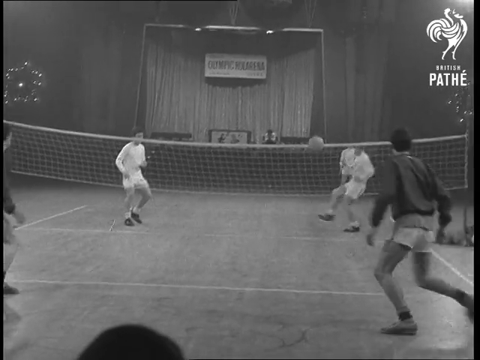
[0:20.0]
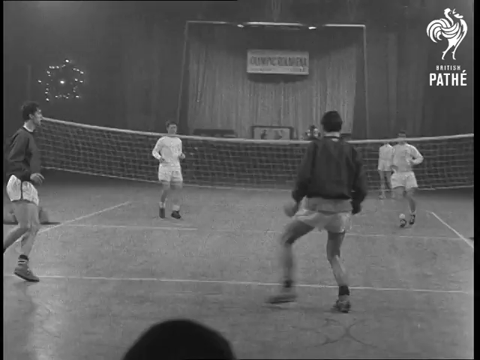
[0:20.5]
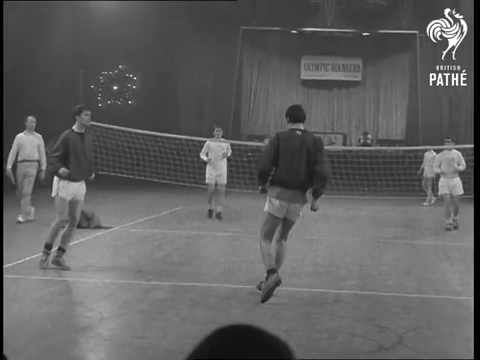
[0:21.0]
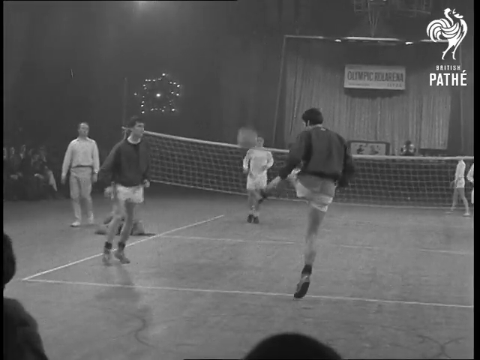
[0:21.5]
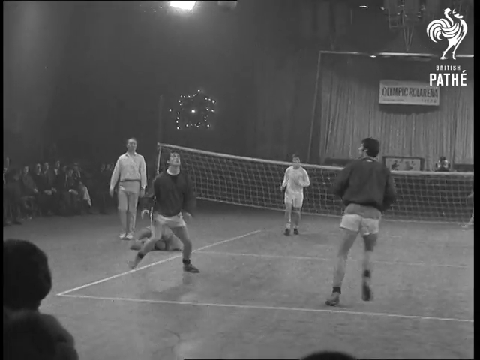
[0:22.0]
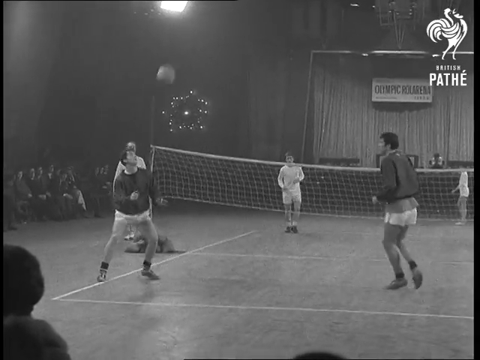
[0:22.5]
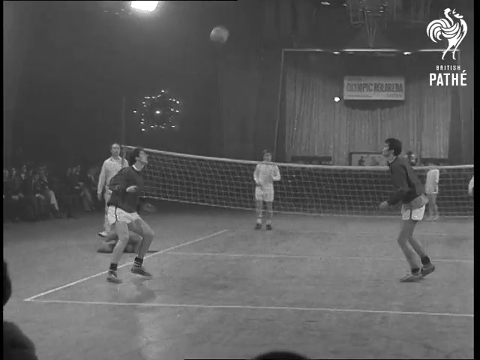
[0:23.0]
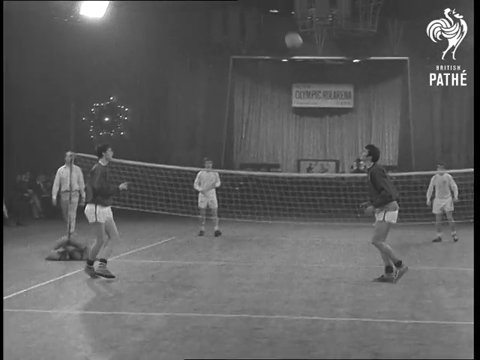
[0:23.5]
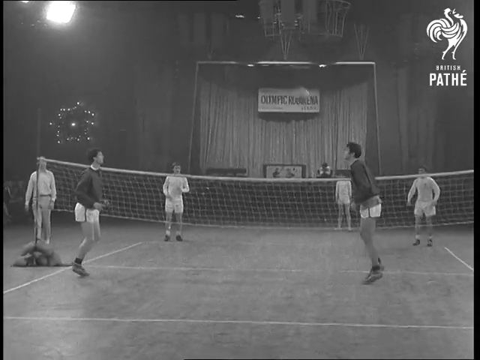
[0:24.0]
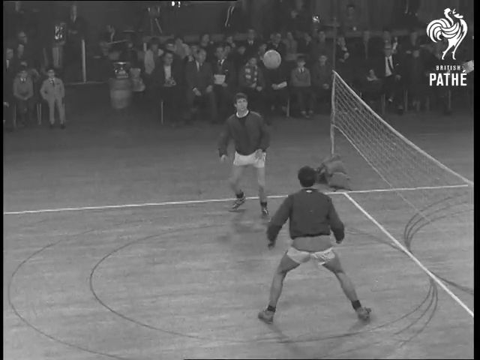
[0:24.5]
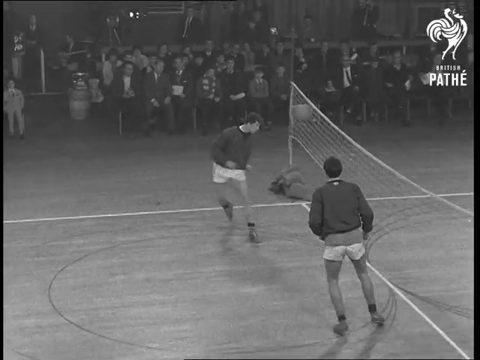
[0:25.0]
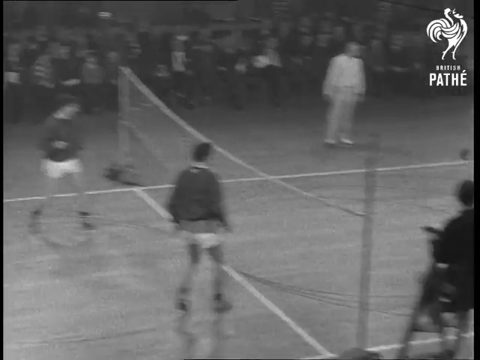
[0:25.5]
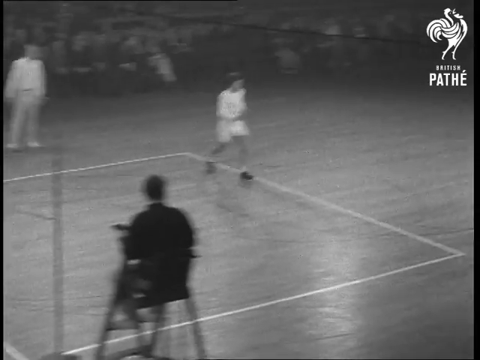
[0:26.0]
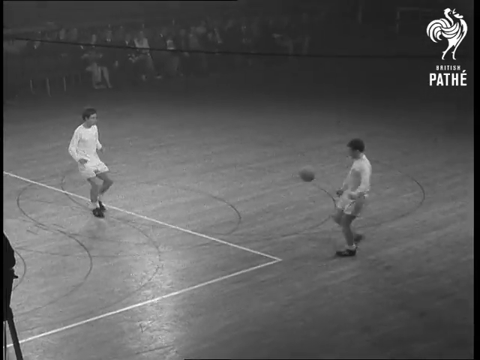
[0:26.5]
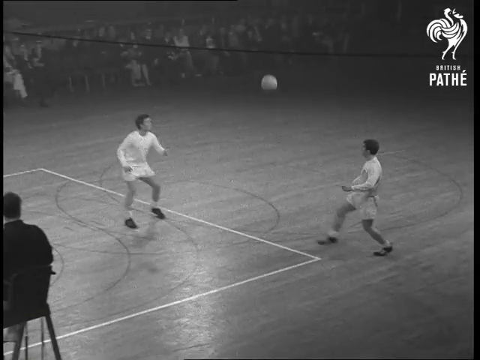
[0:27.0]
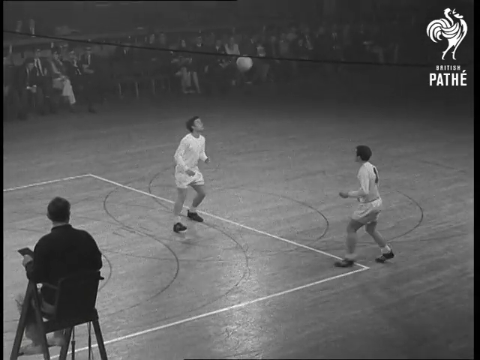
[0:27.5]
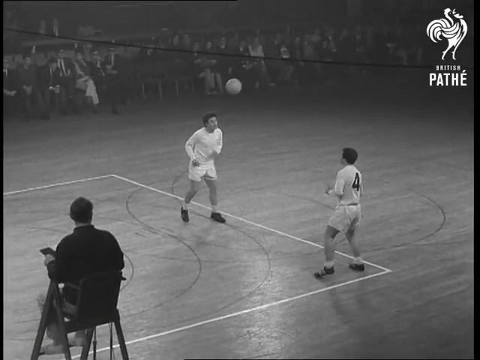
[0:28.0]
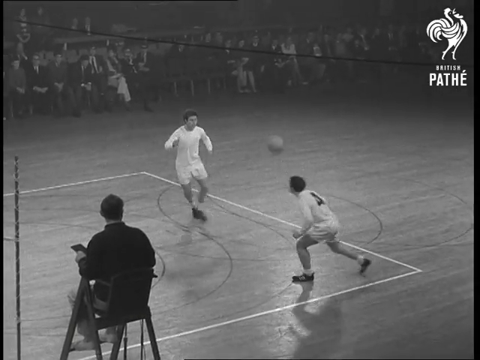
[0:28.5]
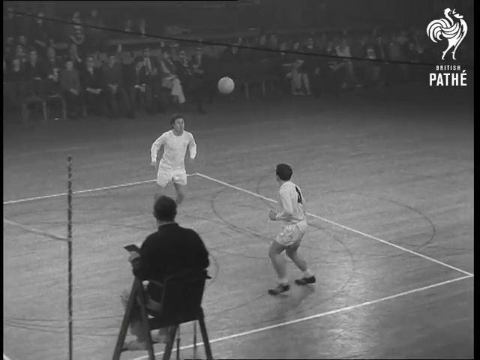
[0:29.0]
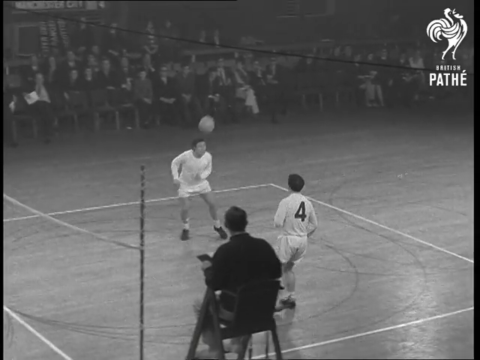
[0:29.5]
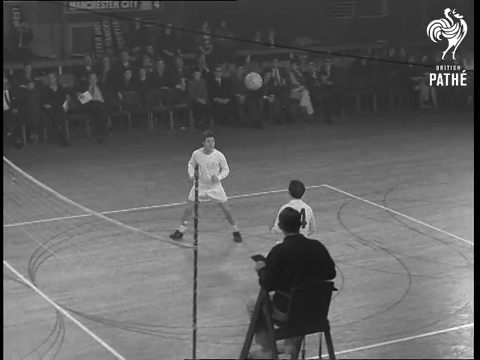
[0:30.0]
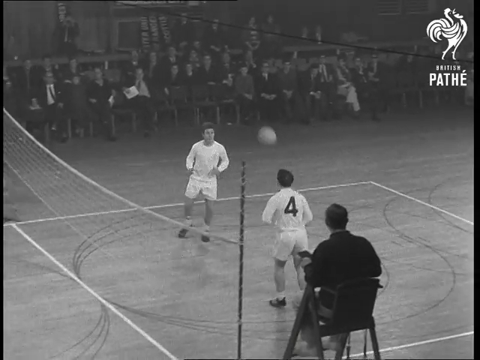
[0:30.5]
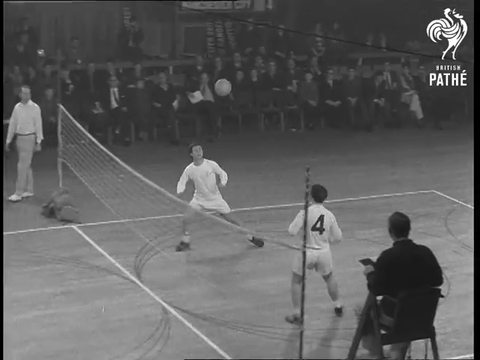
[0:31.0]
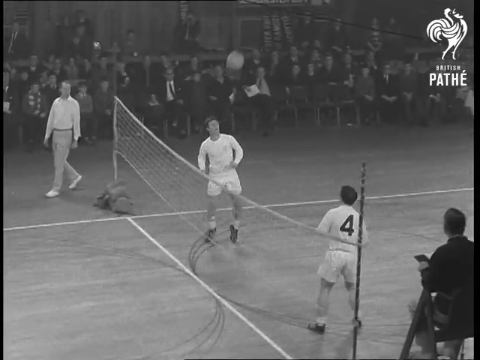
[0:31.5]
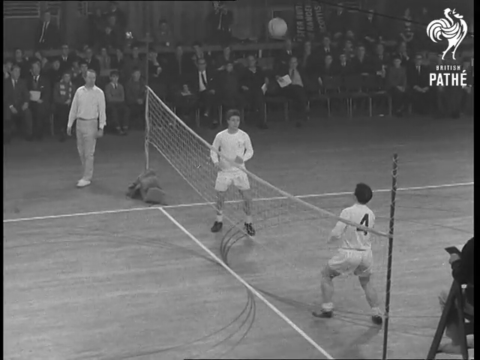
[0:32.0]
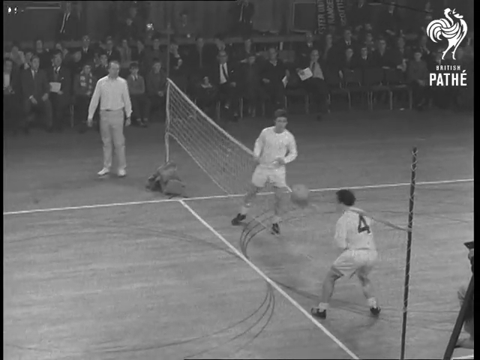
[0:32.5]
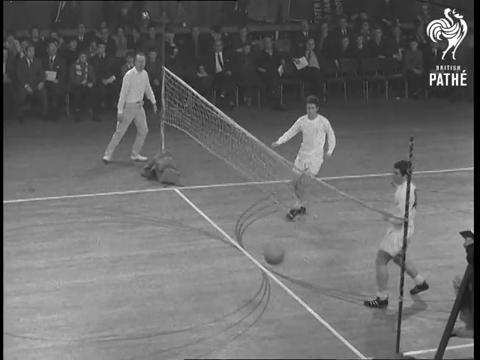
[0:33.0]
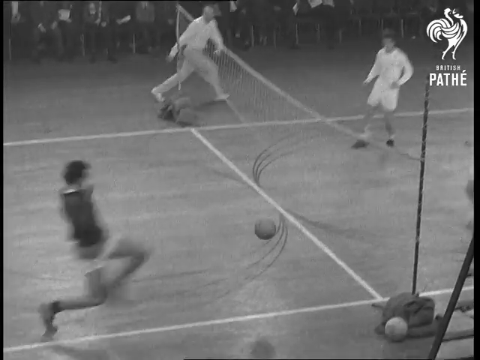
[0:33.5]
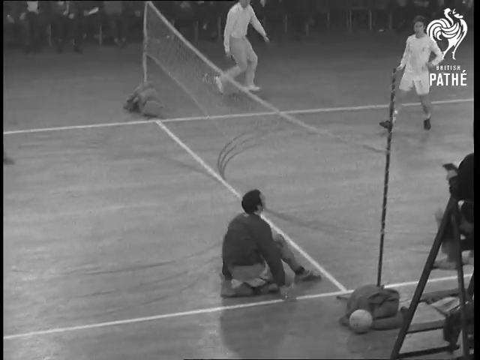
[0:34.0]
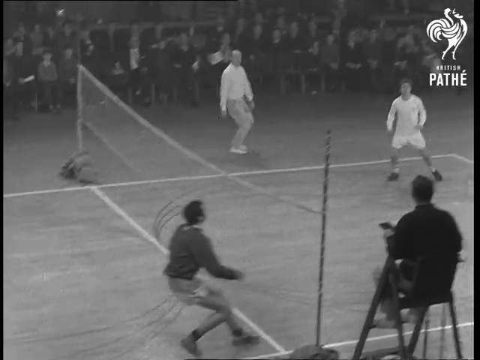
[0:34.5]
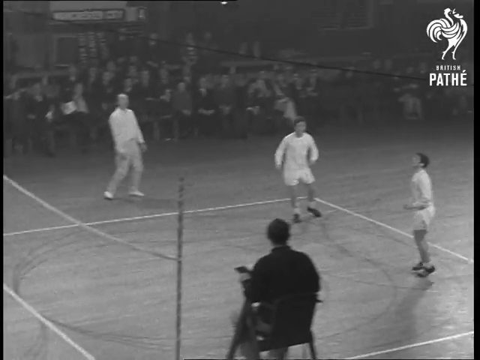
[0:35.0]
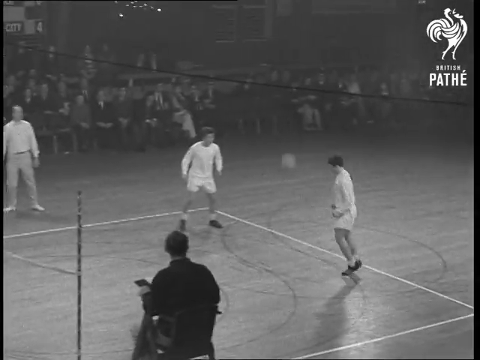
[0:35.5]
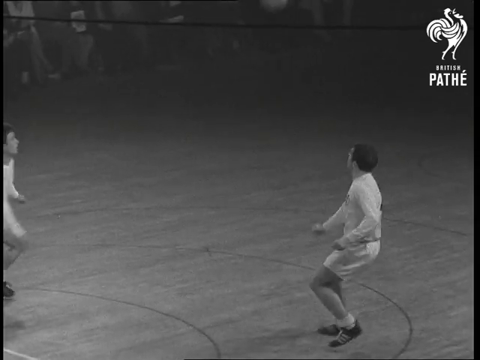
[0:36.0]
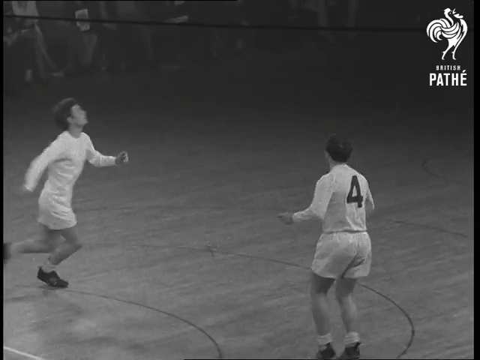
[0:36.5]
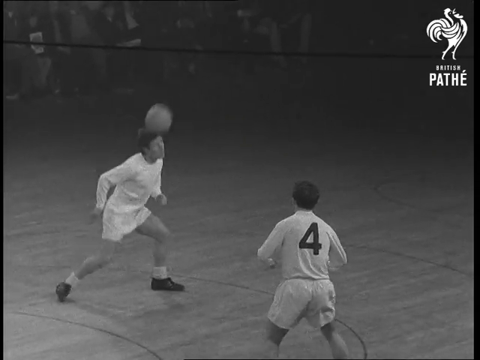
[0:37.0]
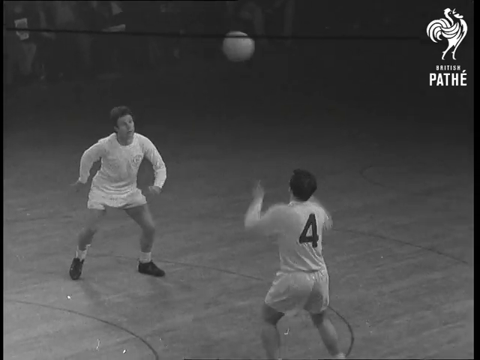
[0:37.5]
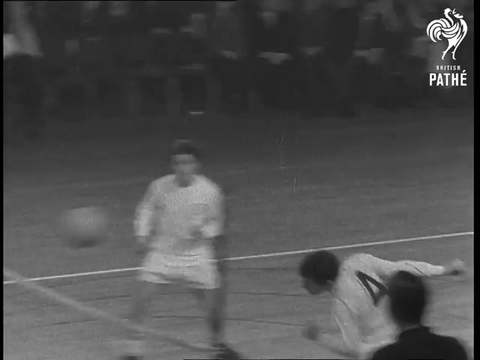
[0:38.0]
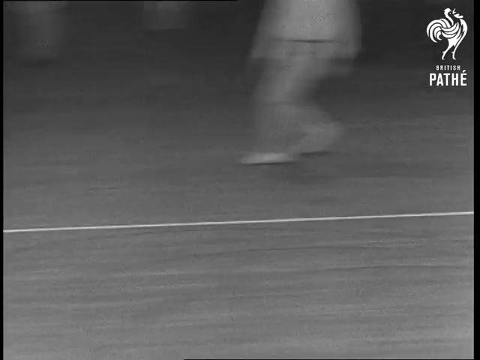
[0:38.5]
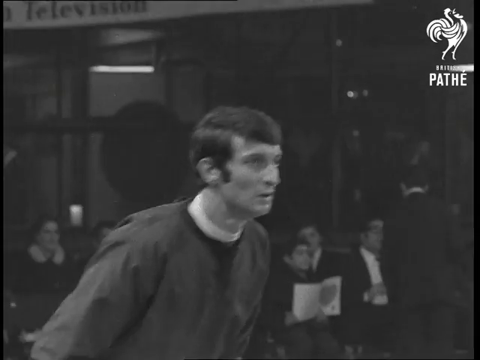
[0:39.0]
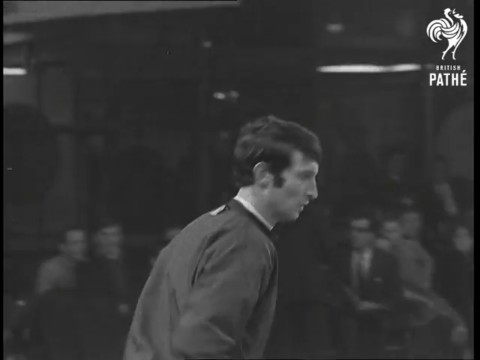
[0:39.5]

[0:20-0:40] In black and white, a game is going on in a gym. Men in white are on one side of a volleyball net, and men in darker colors are on the other side. The players hit the ball with the tops of their heads and can also use their feet to get the ball over to the other side. A crowd in the bleachers watches. The players progressively pass the ball head to head, from one person to the next, and then kind of slam it onto the opponent's side with their heads. It looks like volleyball without the use of hands; the players seem to be allowed only to kick the ball with the toe or hit it with the head. There is a stage in the background, and a sign hangs in the background with a very long word on it that is blurry and hard to read.